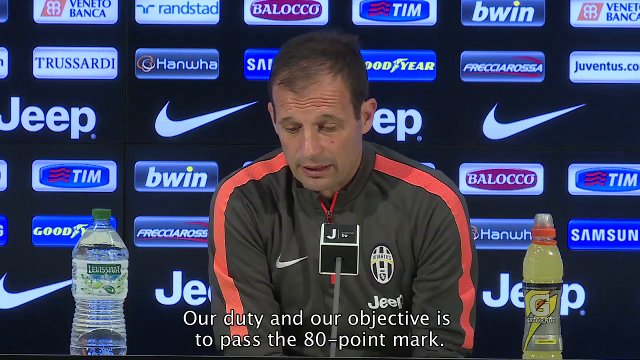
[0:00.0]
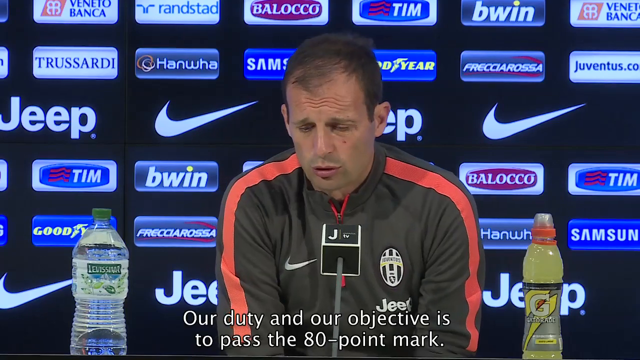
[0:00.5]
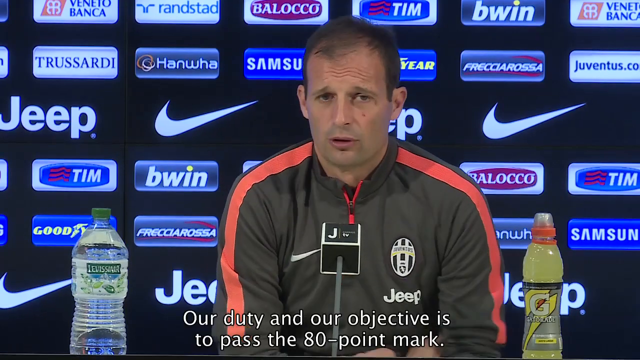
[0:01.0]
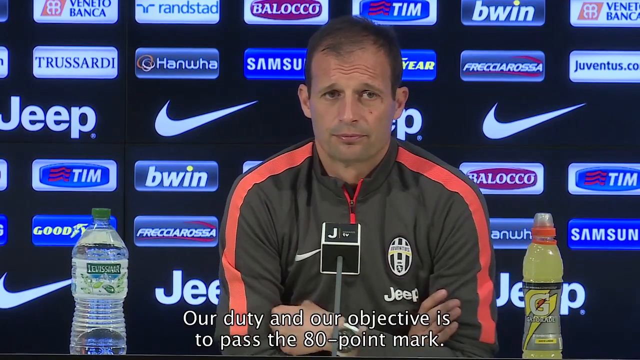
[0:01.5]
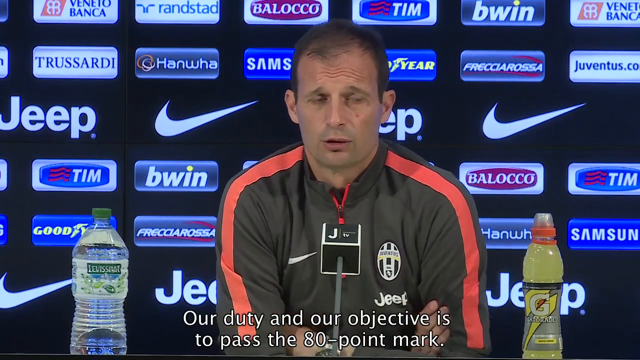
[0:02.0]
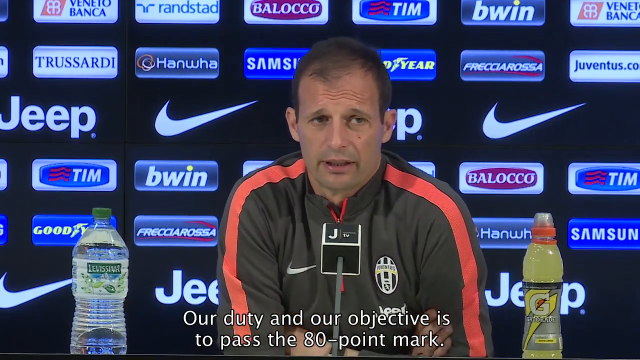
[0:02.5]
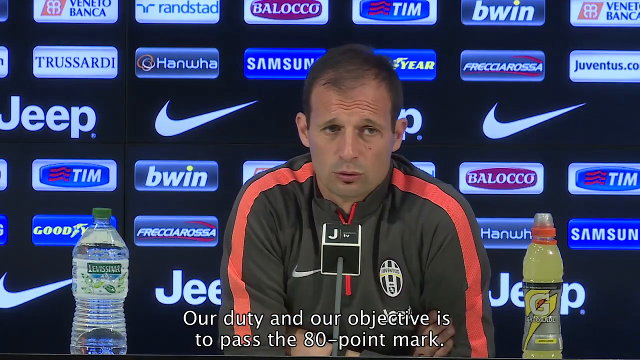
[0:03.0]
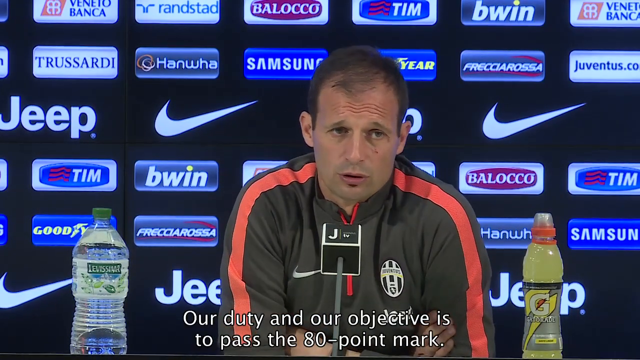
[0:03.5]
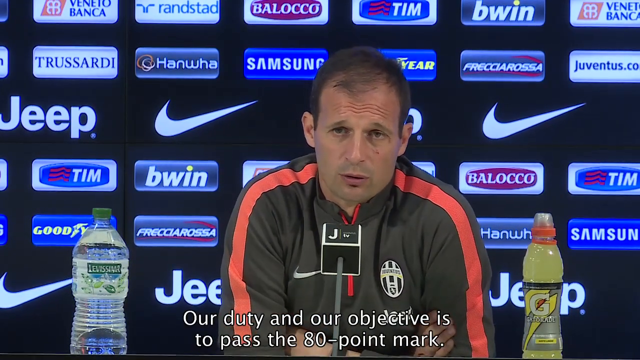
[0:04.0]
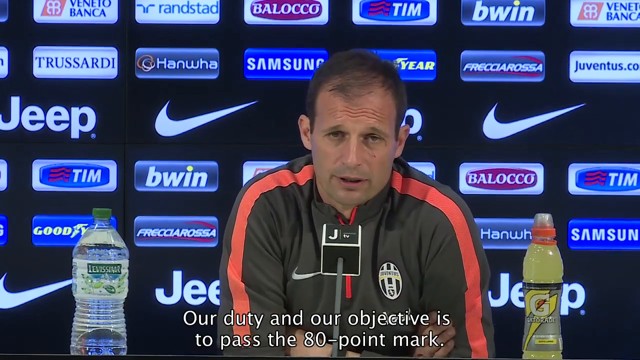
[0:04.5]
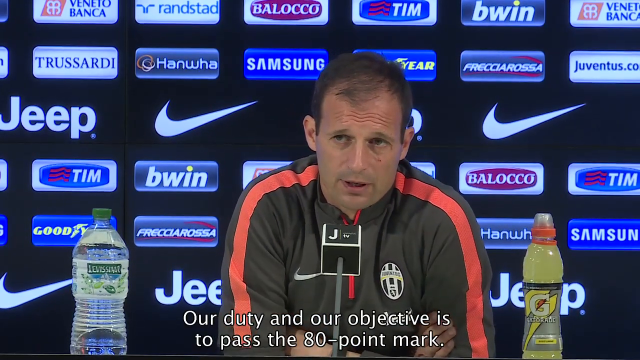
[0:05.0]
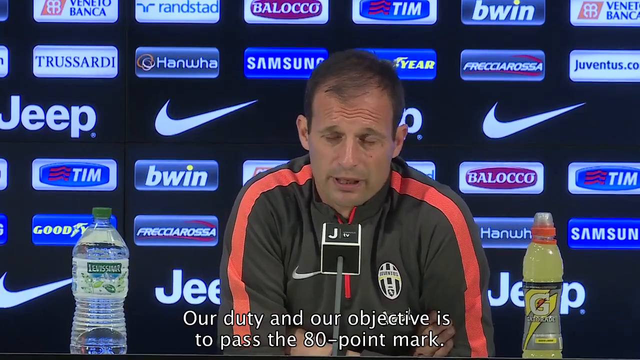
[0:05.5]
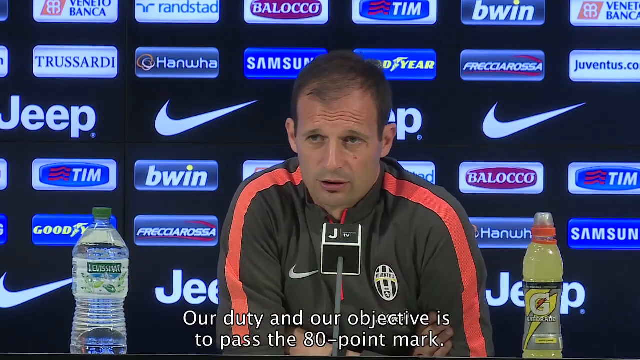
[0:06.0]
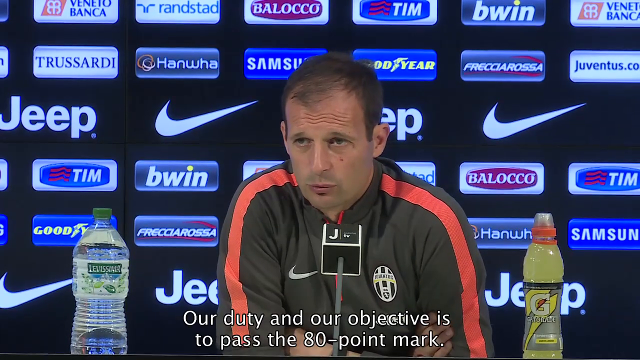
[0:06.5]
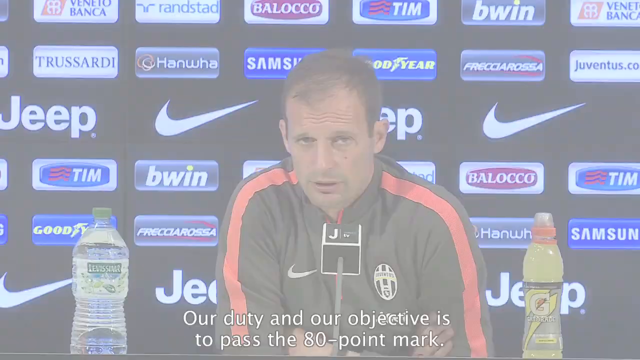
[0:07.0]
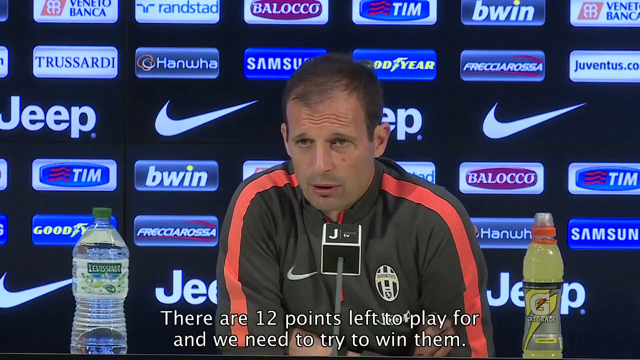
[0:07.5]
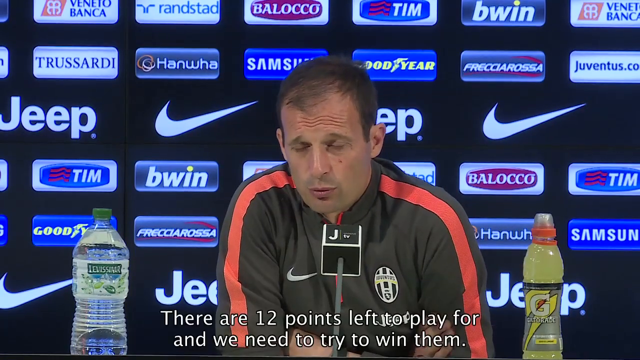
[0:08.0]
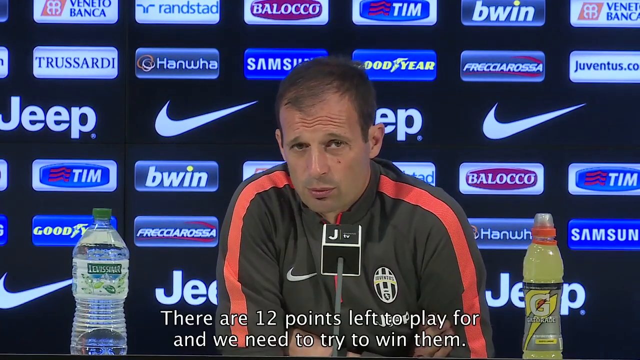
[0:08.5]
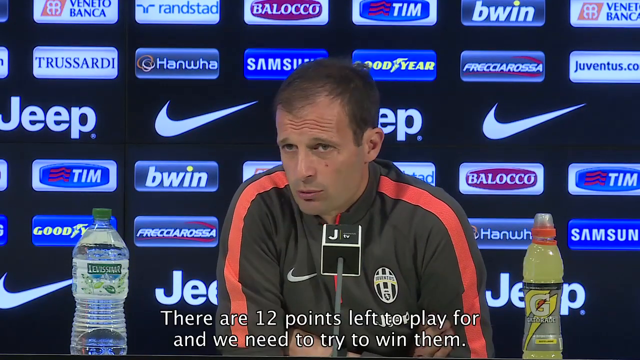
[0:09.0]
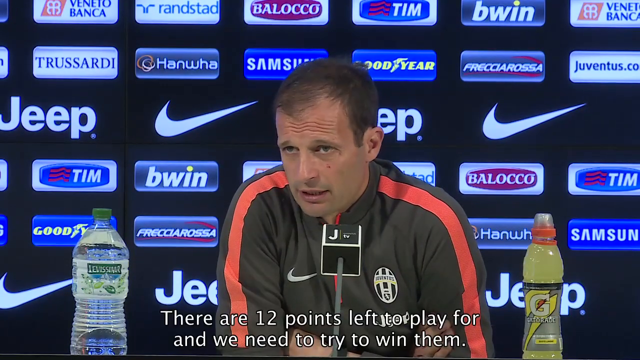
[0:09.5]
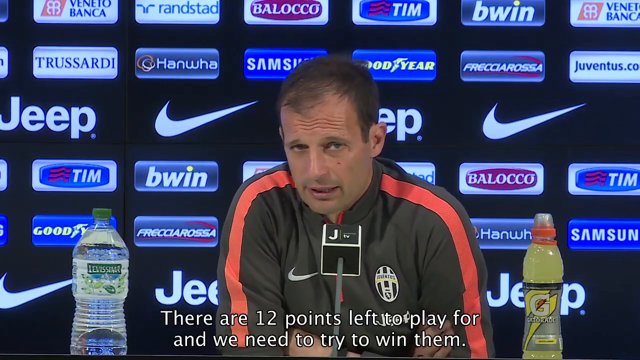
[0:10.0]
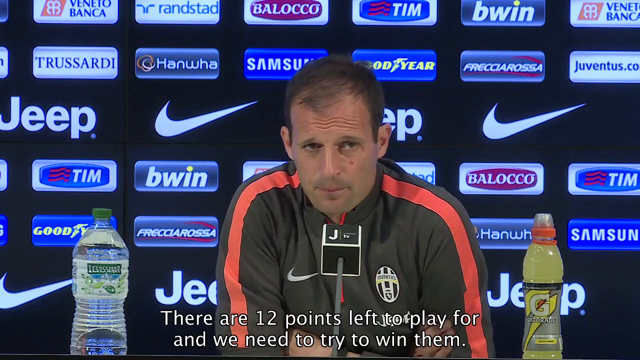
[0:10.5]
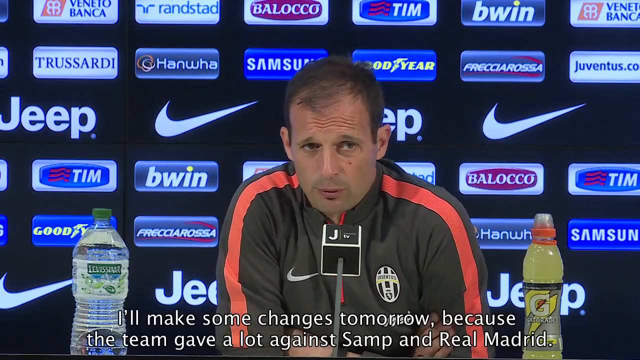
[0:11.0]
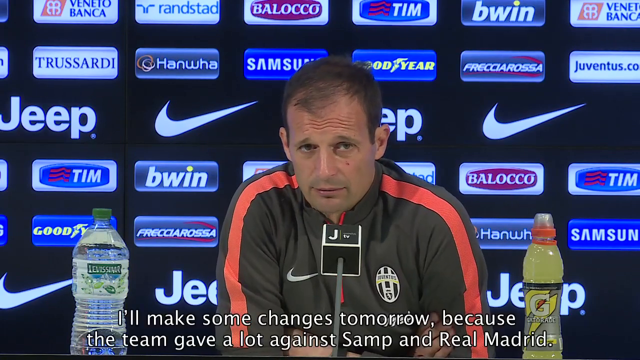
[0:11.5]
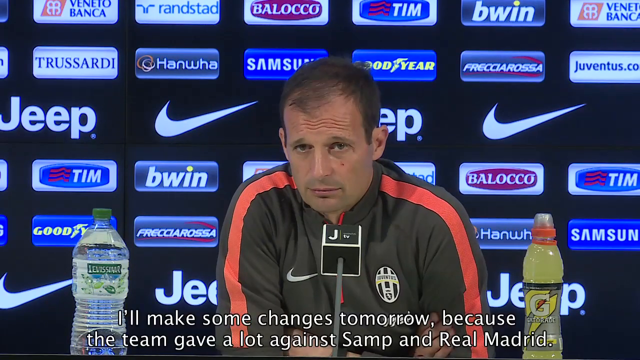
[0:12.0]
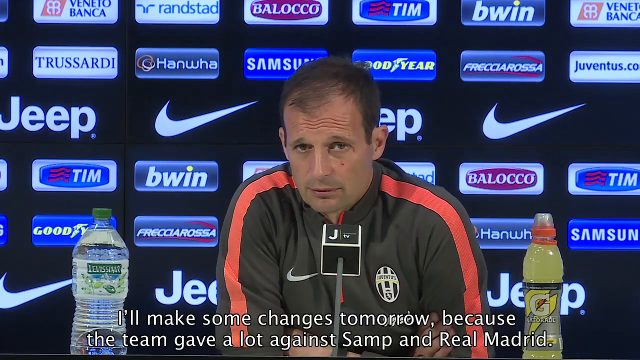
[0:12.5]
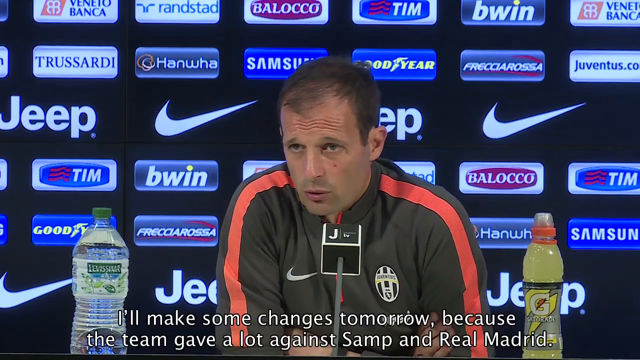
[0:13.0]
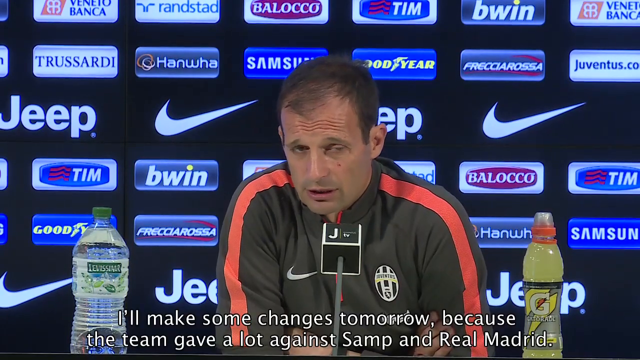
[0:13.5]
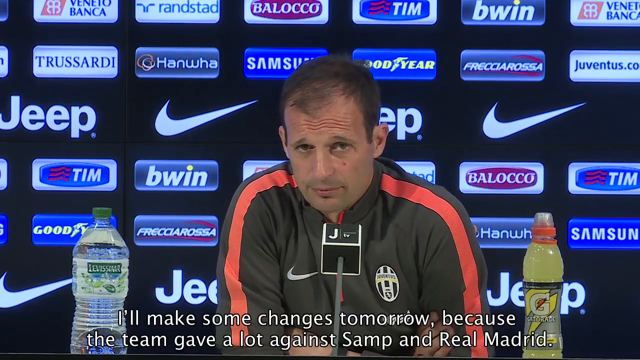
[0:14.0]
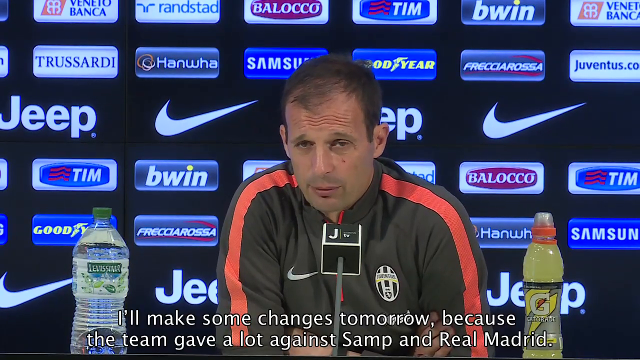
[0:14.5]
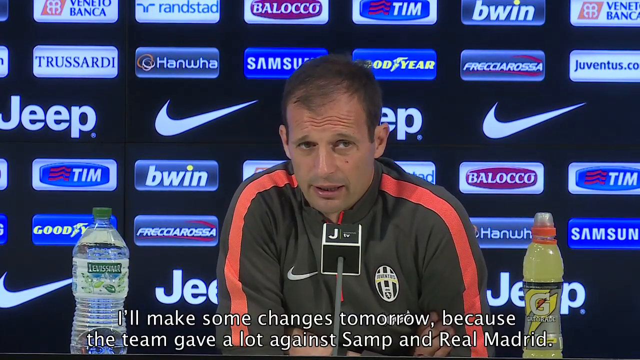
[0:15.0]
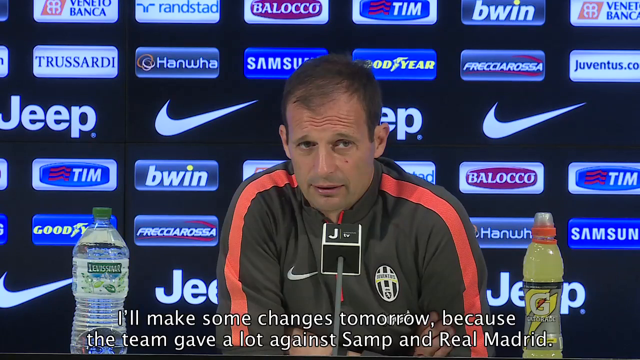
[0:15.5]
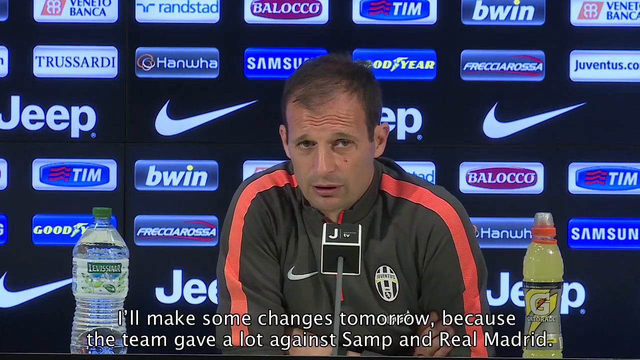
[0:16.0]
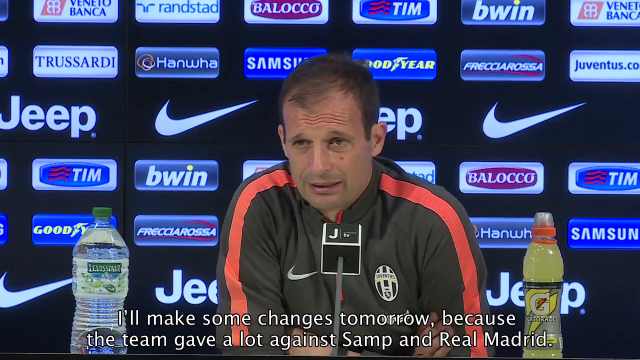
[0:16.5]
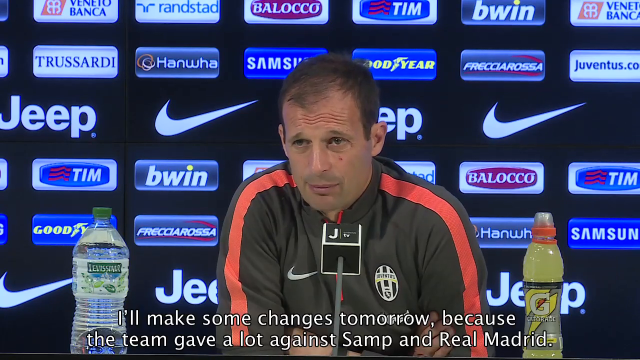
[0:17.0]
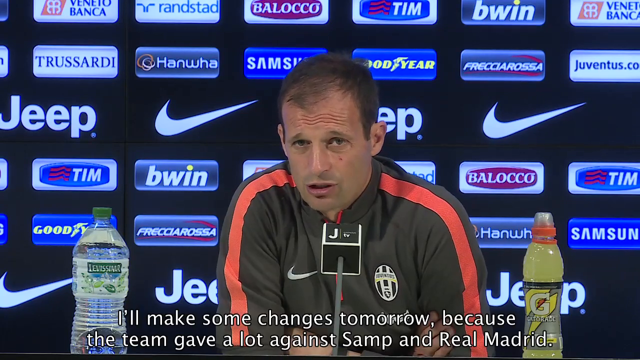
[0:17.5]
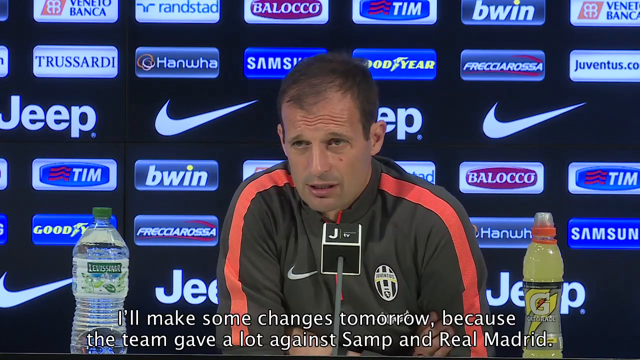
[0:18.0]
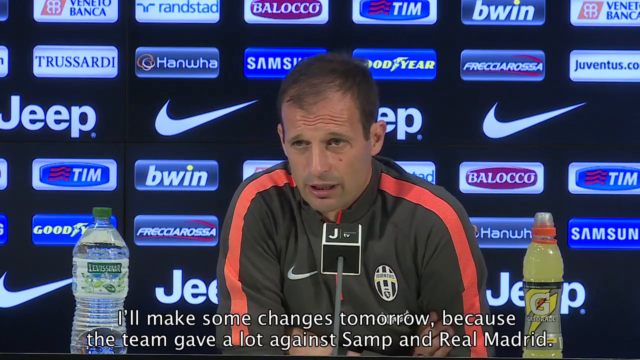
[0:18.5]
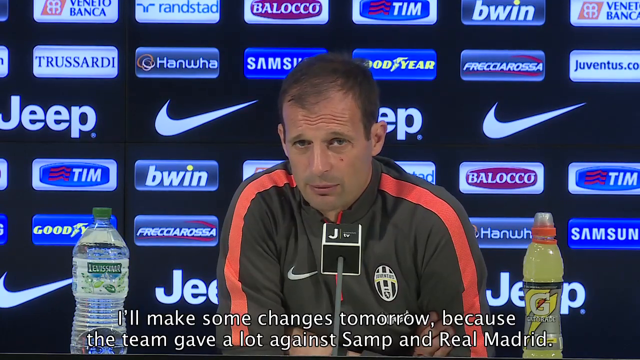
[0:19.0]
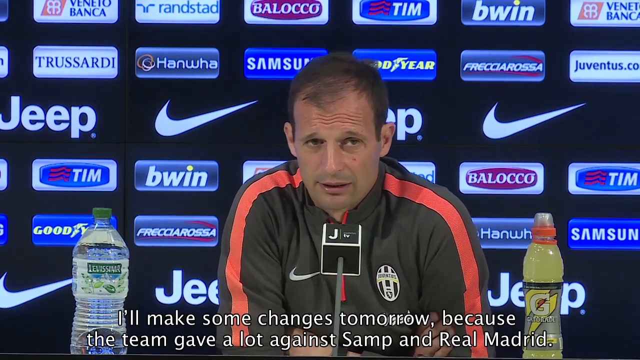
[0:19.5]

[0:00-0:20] A man sits at a microphone, with a small microphone in front of him. The video is sport-related and turns out to be about soccer. His words appear in English subtitles at the bottom of the screen, reading: "our duty and our objective is to pass the 80 point mark. There are 12 points left to play for and we need to try to win them. I'll make some changes tomorrow because the team gave a lot against Samp and Real Madrid." For most of the shot he keeps his arms folded while talking, his elbows resting on the surface in front of him and his hands tucked into the corners between his folded arms and his body.